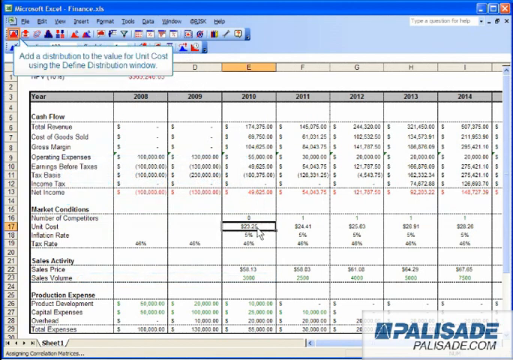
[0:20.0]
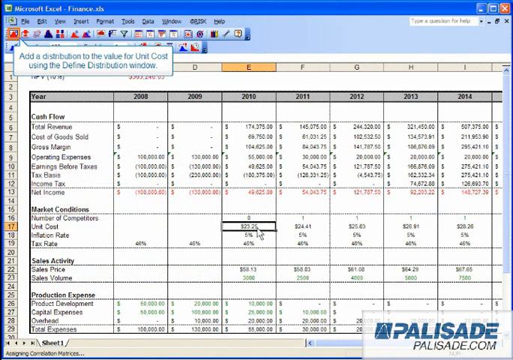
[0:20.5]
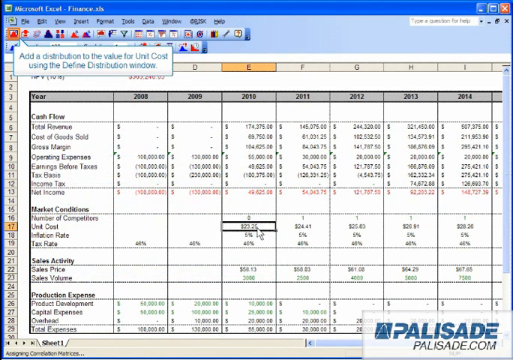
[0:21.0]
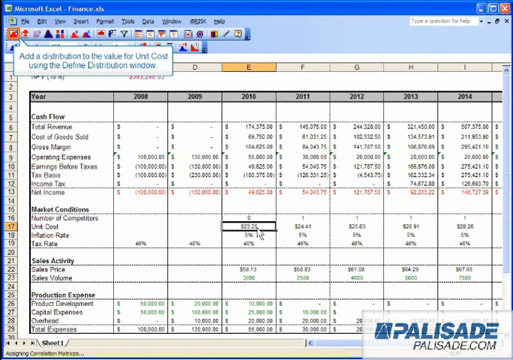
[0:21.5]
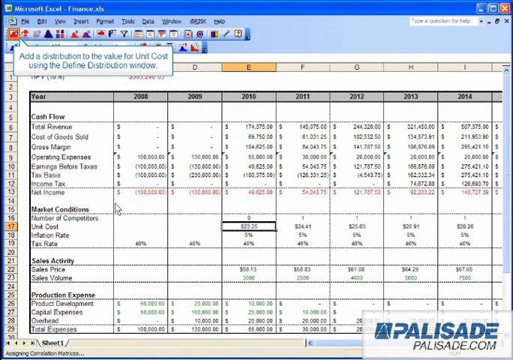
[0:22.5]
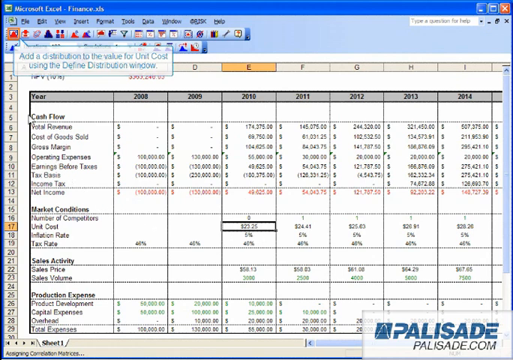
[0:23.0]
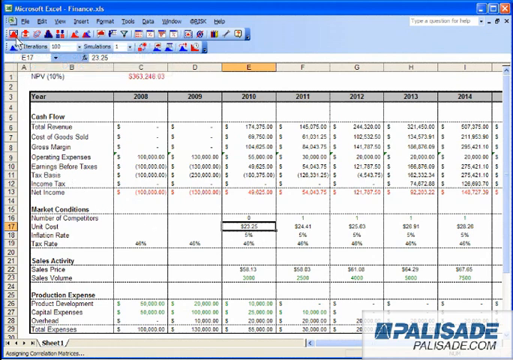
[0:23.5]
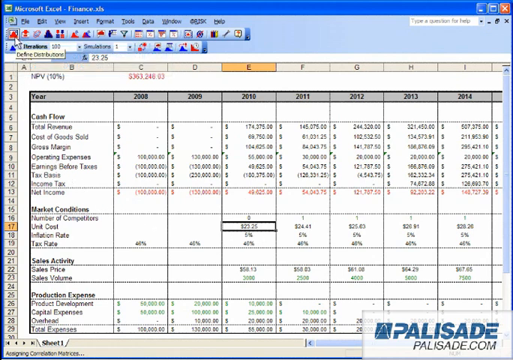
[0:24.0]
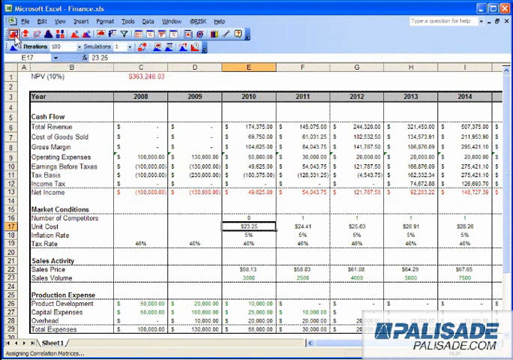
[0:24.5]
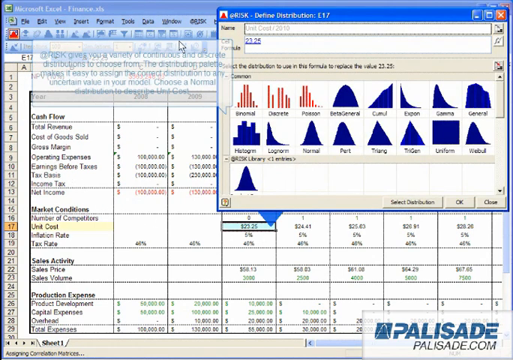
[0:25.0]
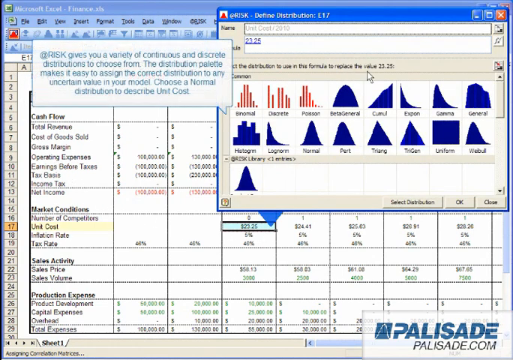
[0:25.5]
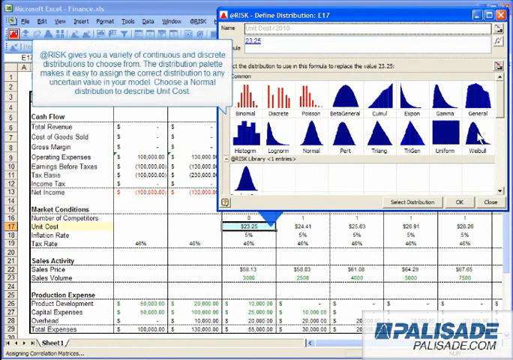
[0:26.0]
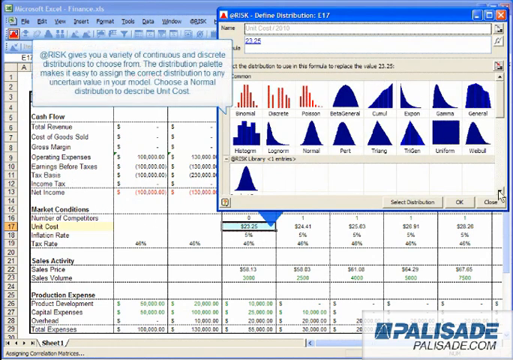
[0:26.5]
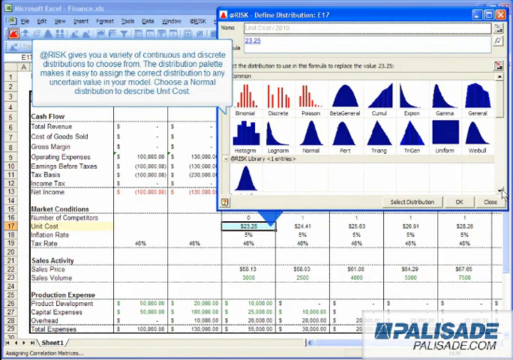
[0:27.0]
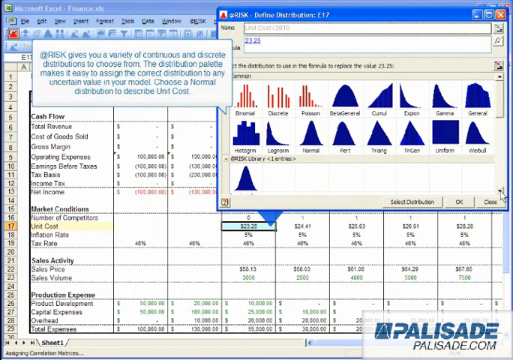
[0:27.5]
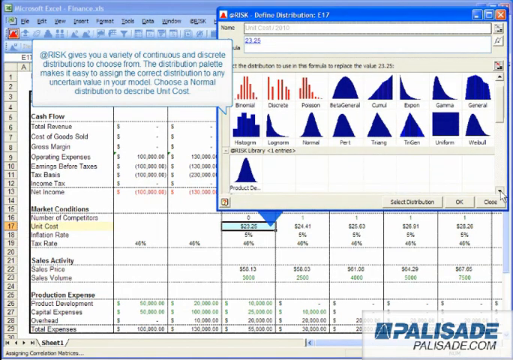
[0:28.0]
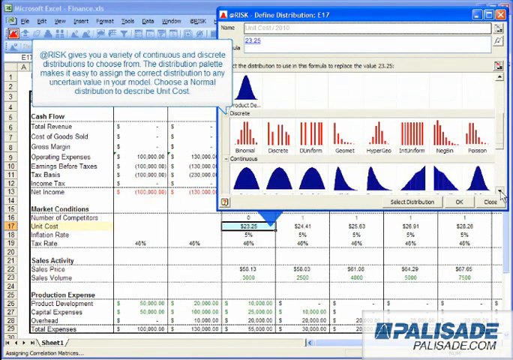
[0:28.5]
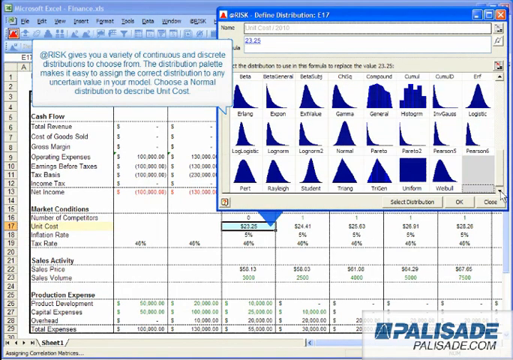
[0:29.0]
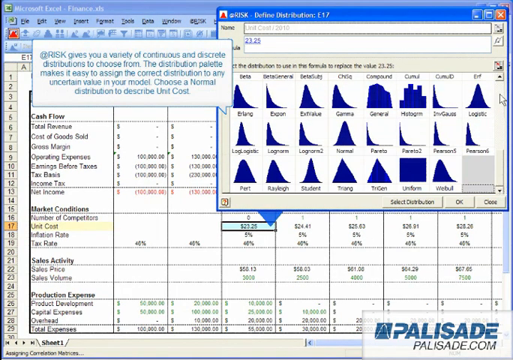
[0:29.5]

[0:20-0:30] The screen recording shows an Excel spreadsheet. The mouse hovers over unit cost, which appears to be $23.25. A button in the top menu is clicked, and a Risk Defined Distribution box pops up. It reads "Risk gives you a variety of continuous and discrete distributions to choose from. The Distribution Palette makes it easy to assign the correct distribution to any uncertain value in your model. Choose Normal Distribution to describe unit cost." The view then returns to the regular spreadsheet, where text reads "Add a distribution to the value for unit cost using the Define Distribution." The list of options is scrolled down.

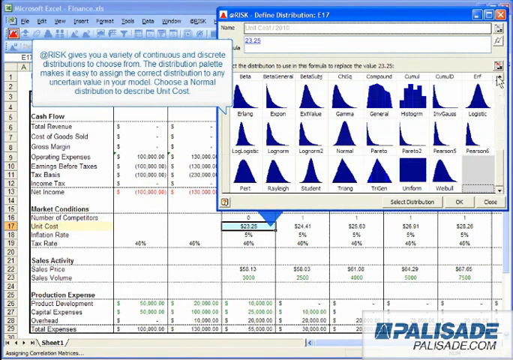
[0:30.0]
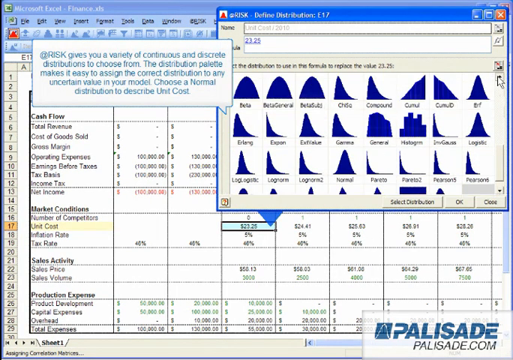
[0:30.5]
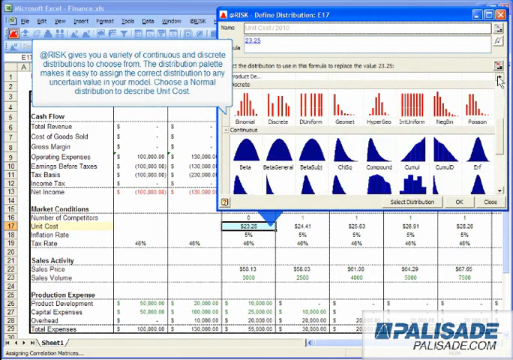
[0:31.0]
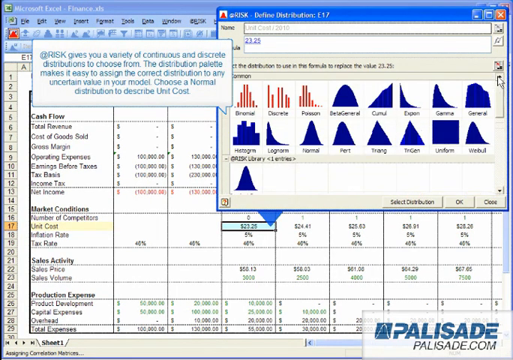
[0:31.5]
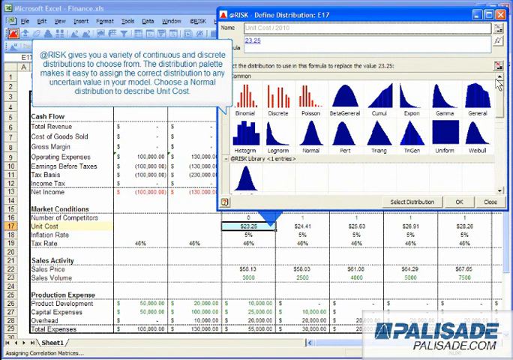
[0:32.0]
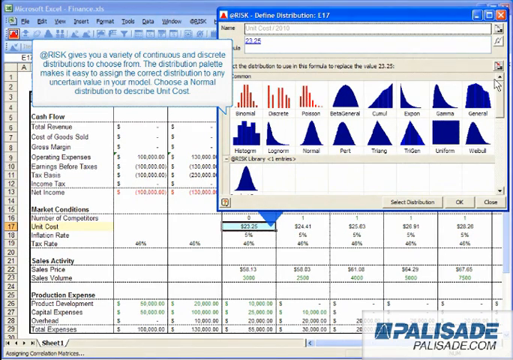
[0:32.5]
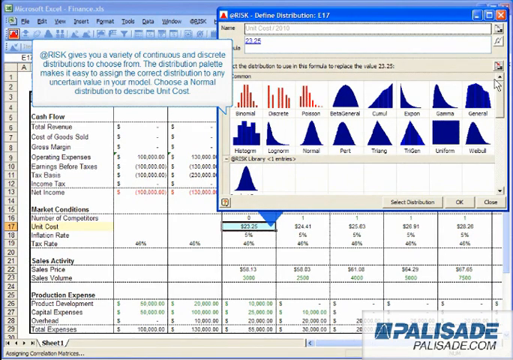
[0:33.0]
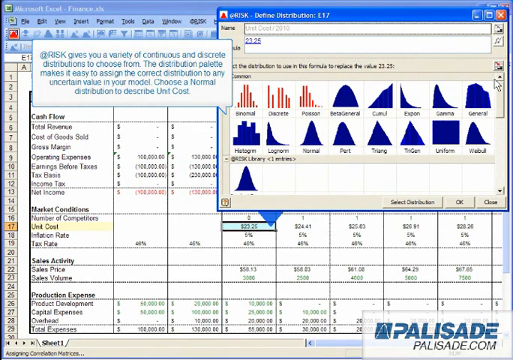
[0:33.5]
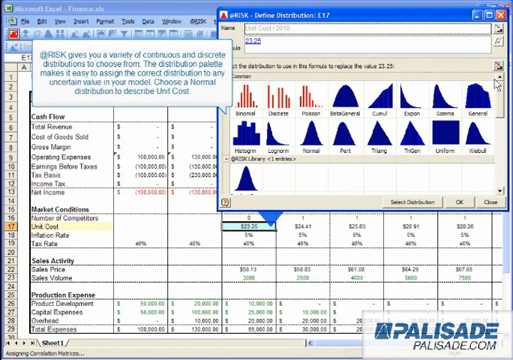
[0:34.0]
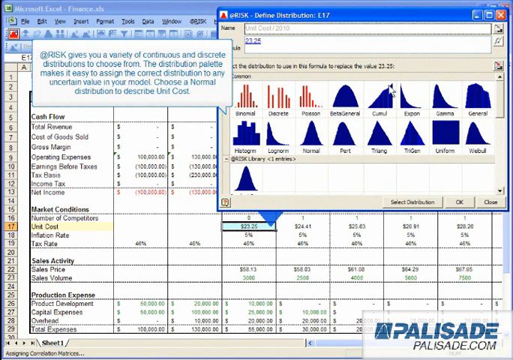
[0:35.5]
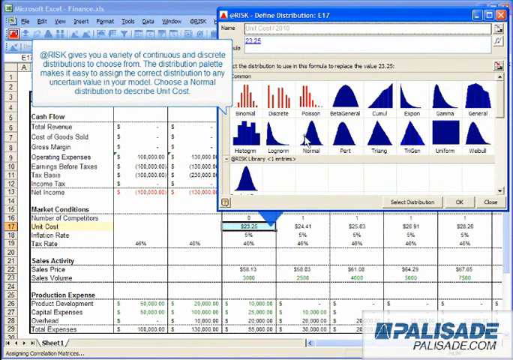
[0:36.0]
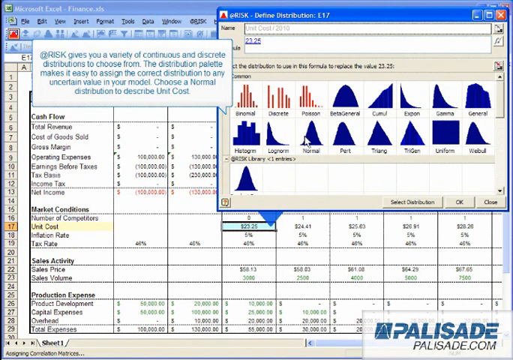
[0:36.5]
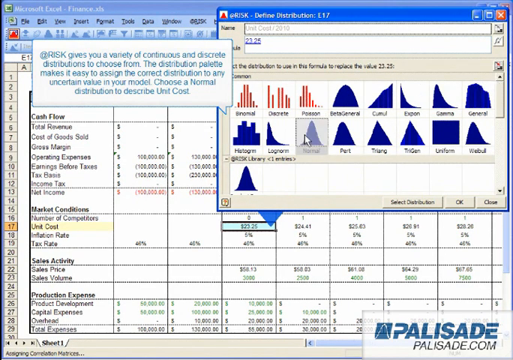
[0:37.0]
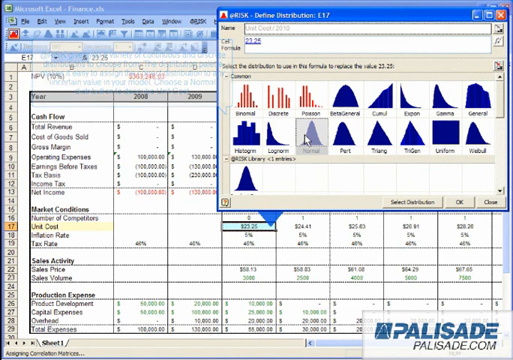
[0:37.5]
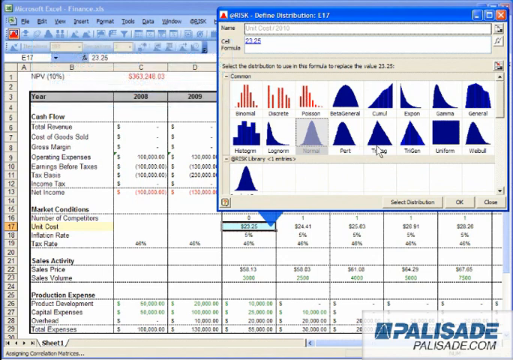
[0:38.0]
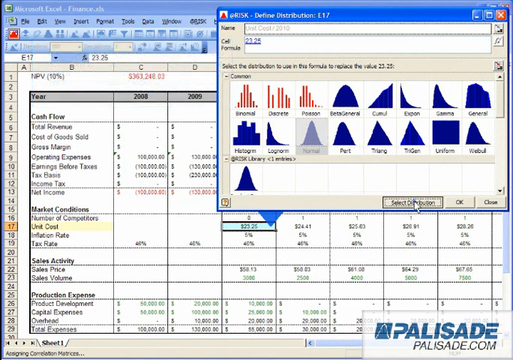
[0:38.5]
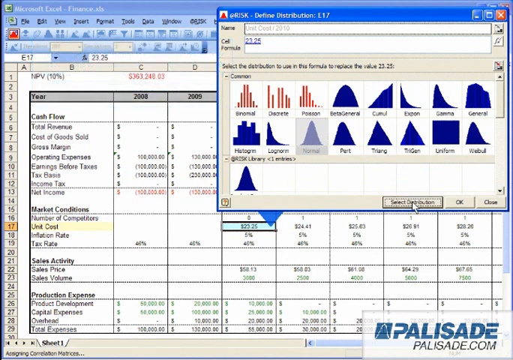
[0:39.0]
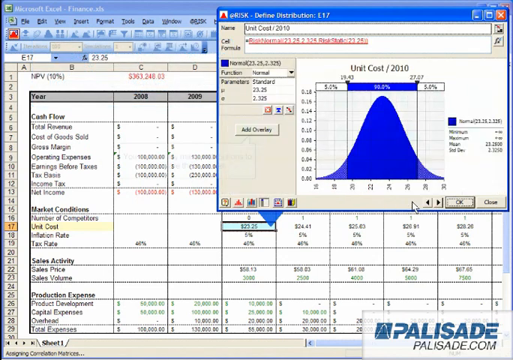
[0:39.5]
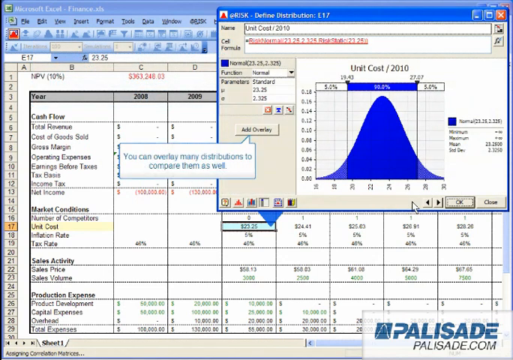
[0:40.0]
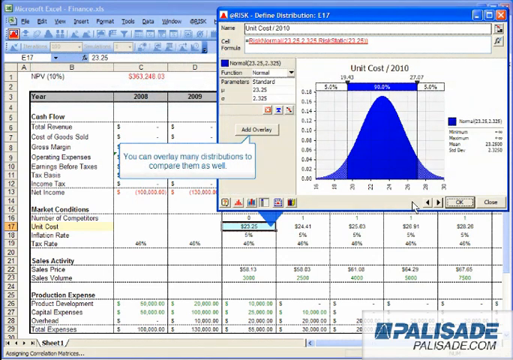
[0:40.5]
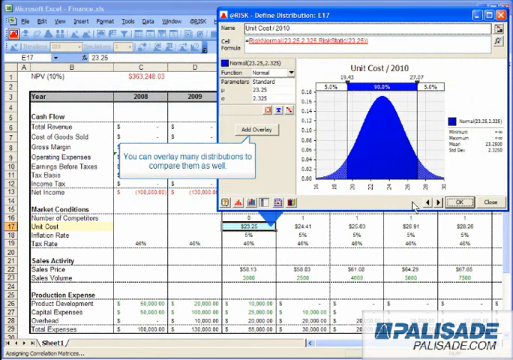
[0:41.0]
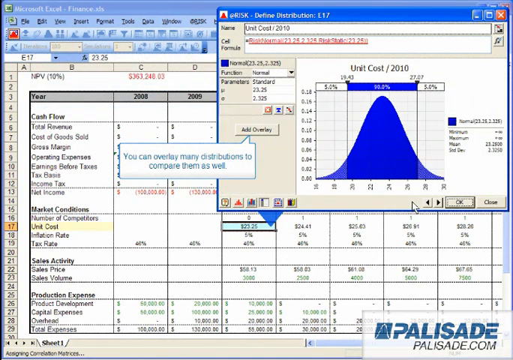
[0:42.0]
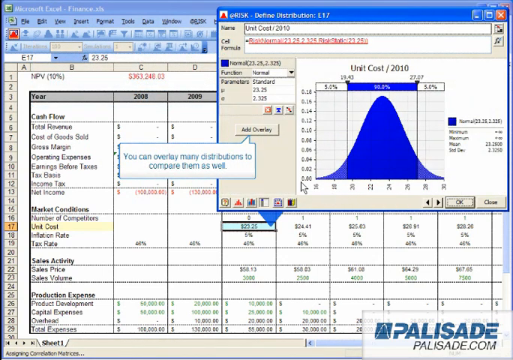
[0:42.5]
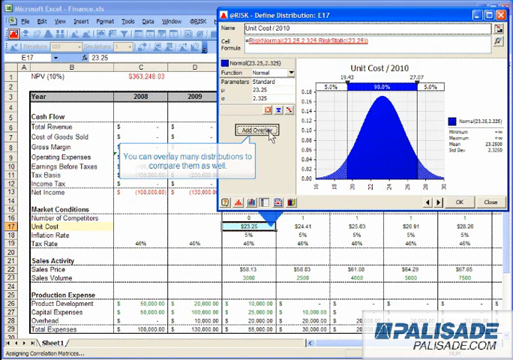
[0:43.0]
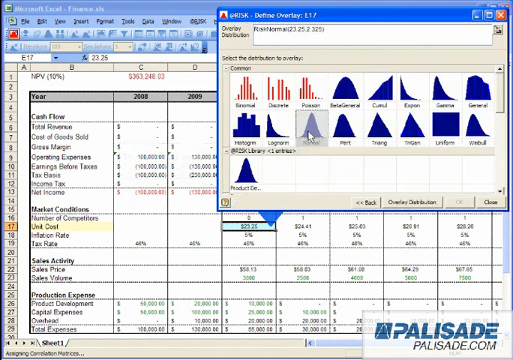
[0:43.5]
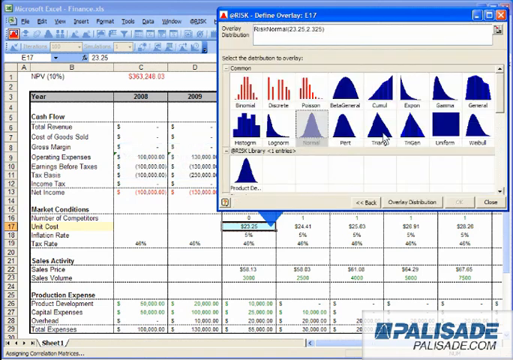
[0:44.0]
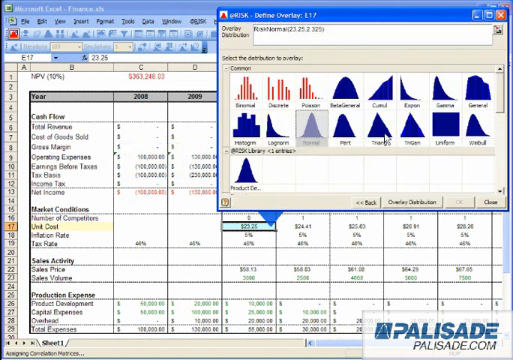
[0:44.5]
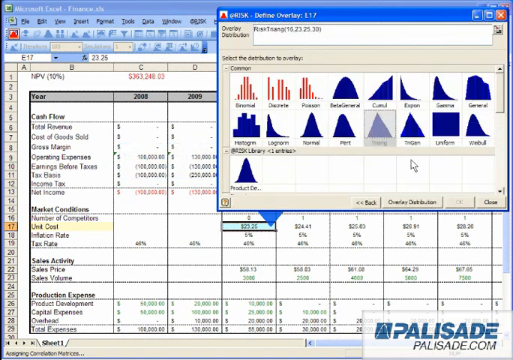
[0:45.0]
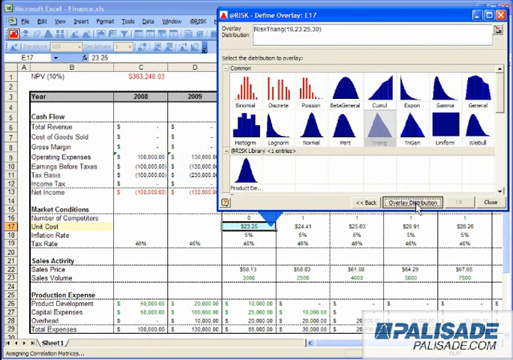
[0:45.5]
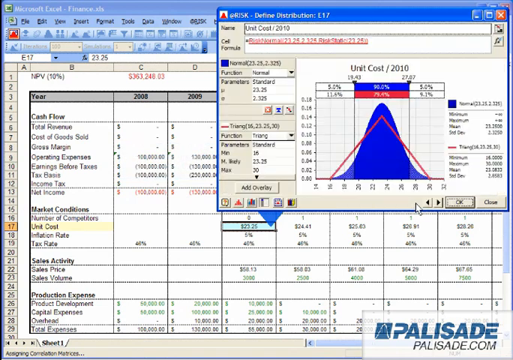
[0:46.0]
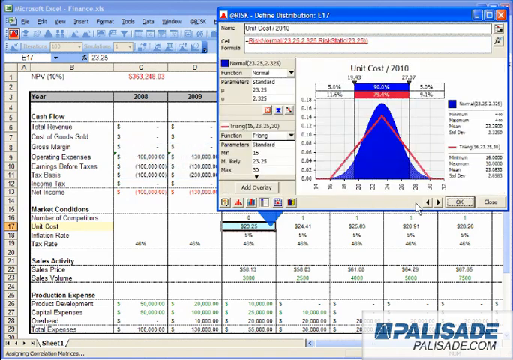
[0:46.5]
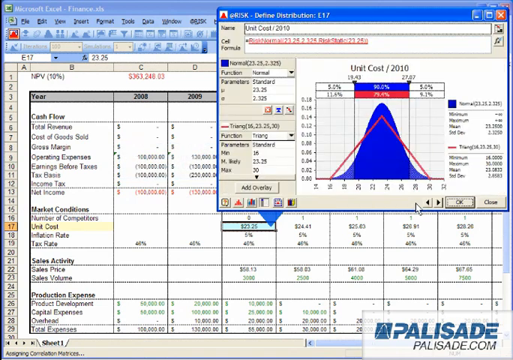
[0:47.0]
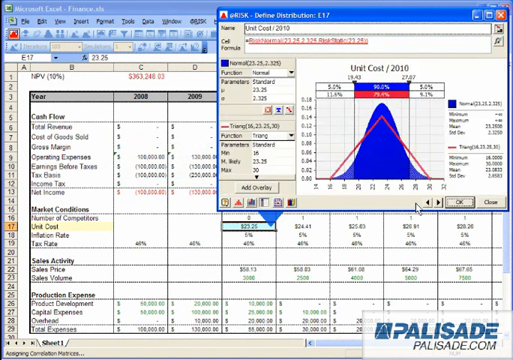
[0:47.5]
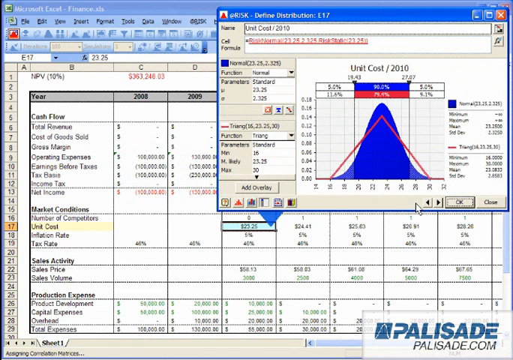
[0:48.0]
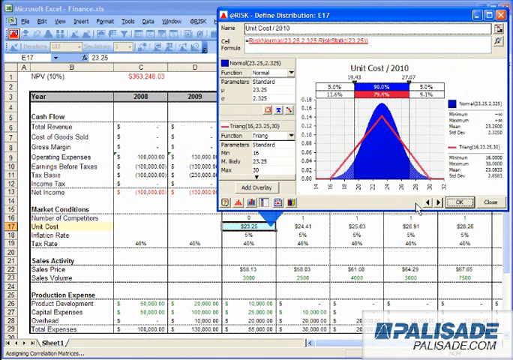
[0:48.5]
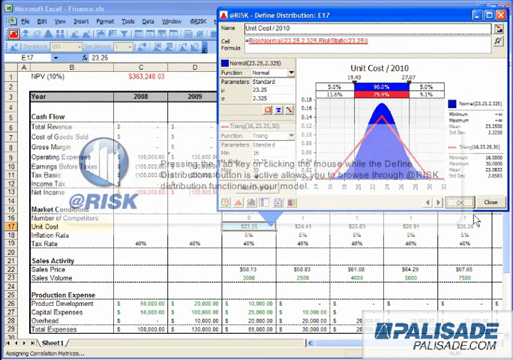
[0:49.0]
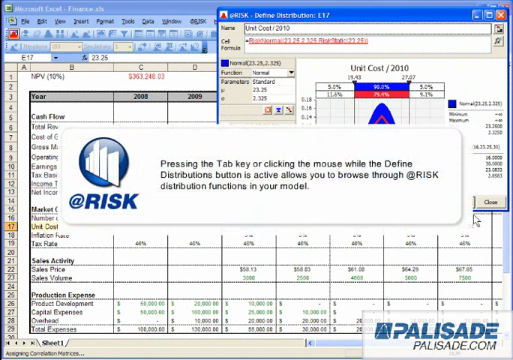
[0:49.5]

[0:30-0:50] The screen recording shows a spreadsheet in Microsoft Excel, with row 17, unit cost, highlighted at $23.25. A button at the top has been clicked, and a banner pops up reading "risk gives you a variety of continuous and discrete distributions to choose from. The distribution palette makes it easy to assign the correct distribution to any uncertain value in your model. Choose a normal distribution to describe unit cost." In the top right corner, a risk define distribution box pops up showing the different formulas, such as discrete, beta general, triangle and uniform, among several others. They look like blue slopes inside the box. The user apparently scrolls through them, selects one and checks it, and a couple of different ones are shown with what they would look like. A banner then pops up in the center of the screen, apparently giving more information about risk.